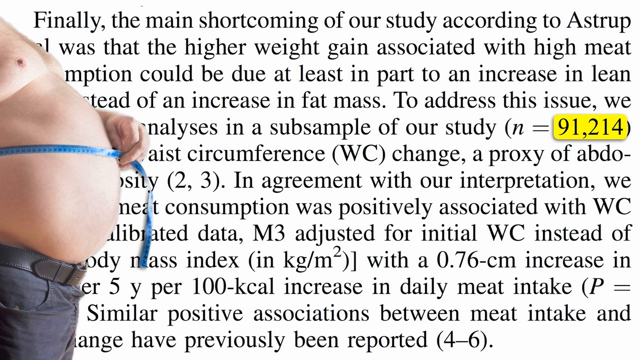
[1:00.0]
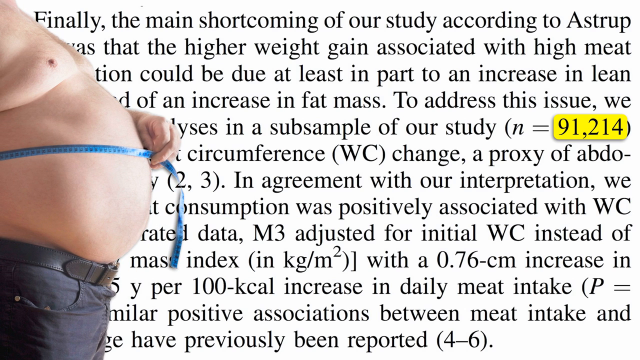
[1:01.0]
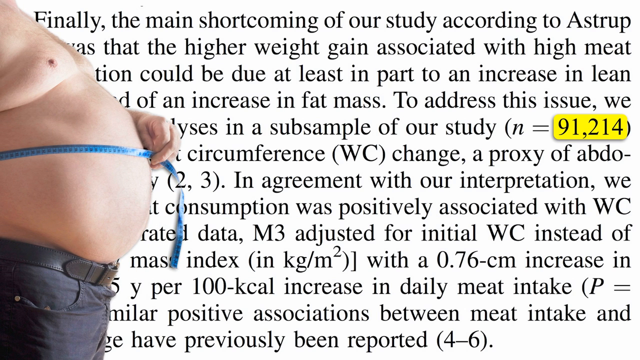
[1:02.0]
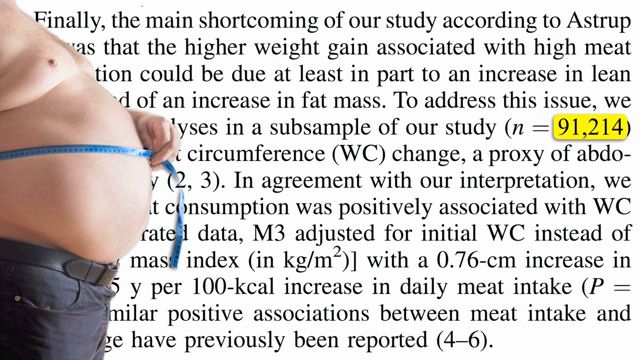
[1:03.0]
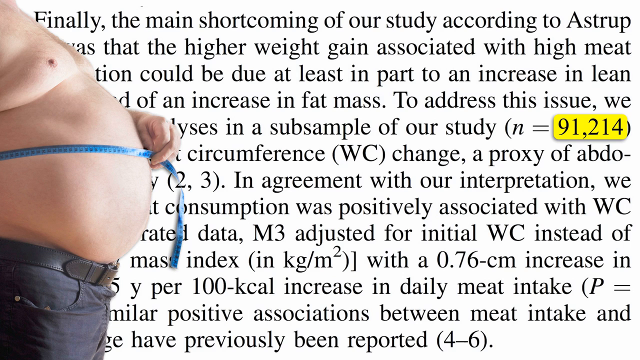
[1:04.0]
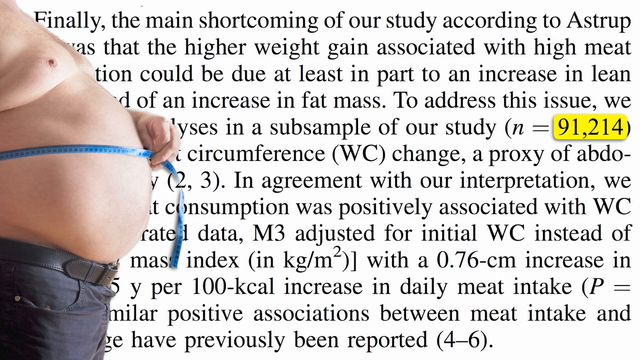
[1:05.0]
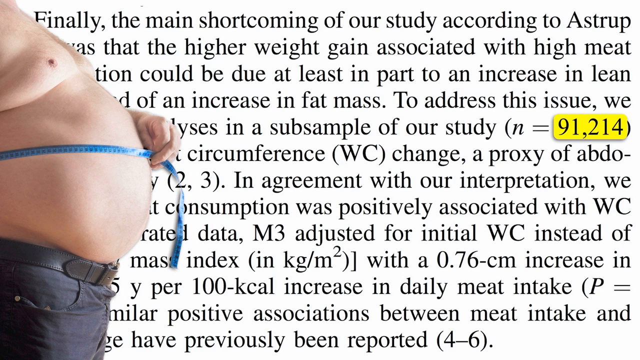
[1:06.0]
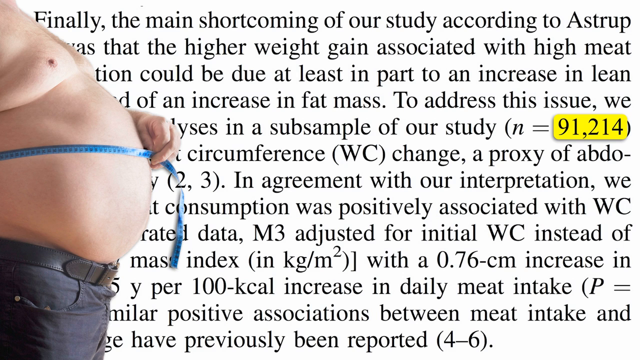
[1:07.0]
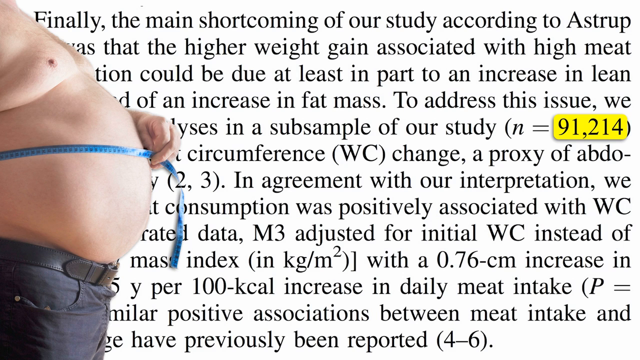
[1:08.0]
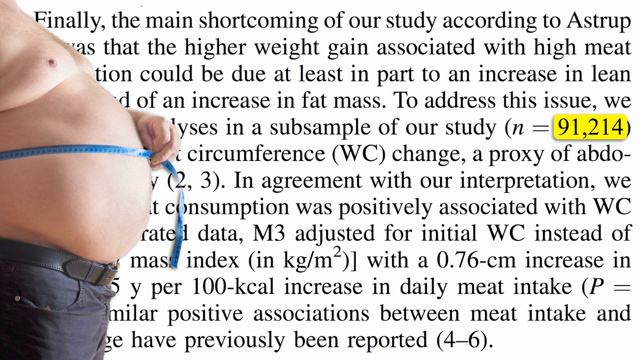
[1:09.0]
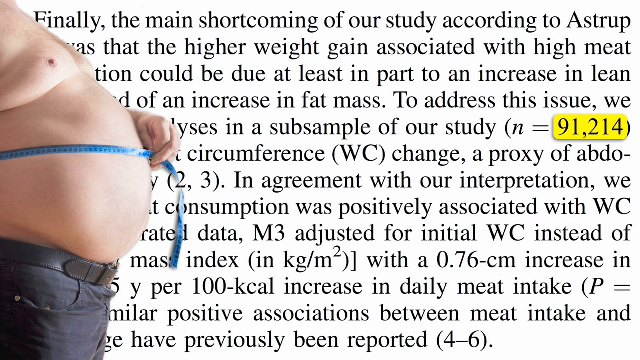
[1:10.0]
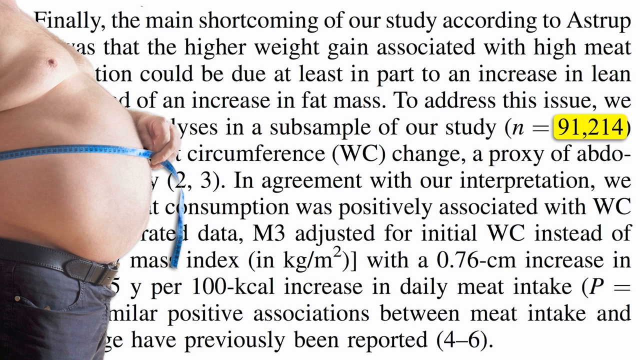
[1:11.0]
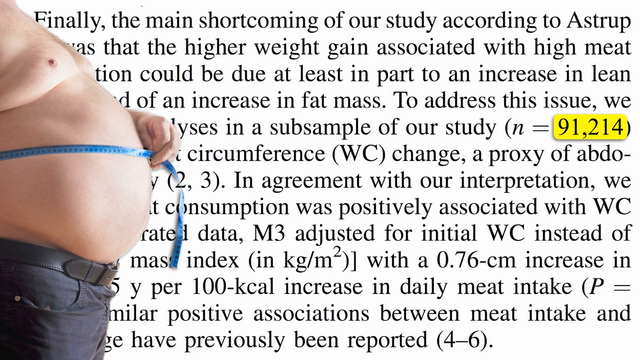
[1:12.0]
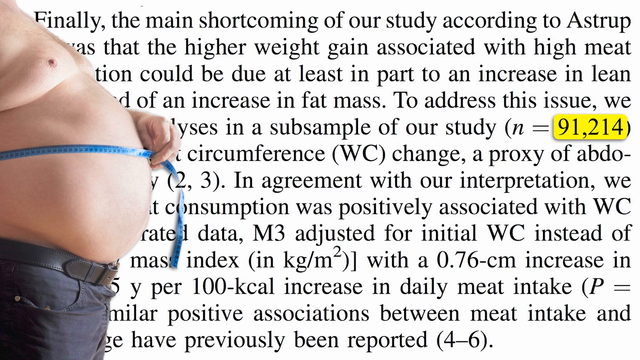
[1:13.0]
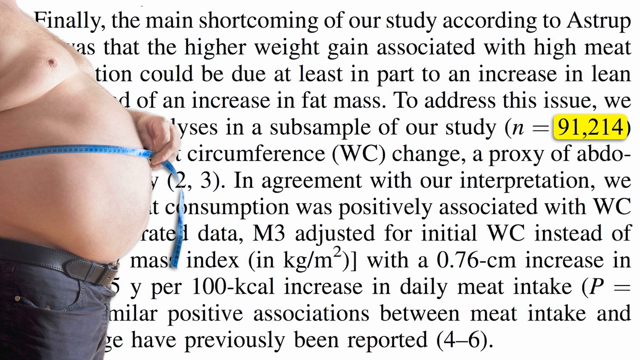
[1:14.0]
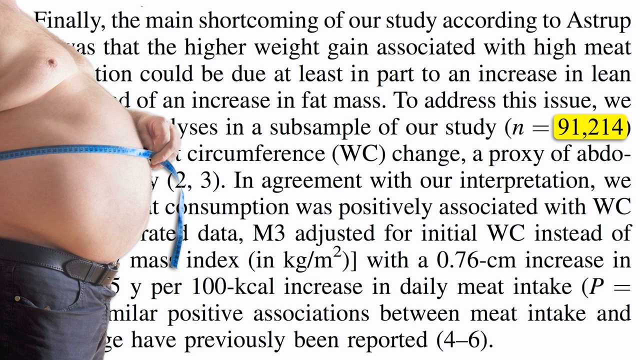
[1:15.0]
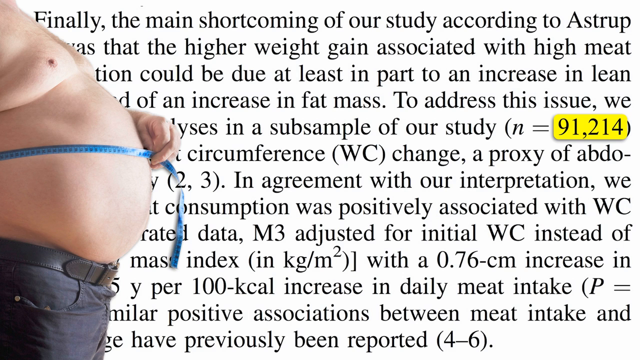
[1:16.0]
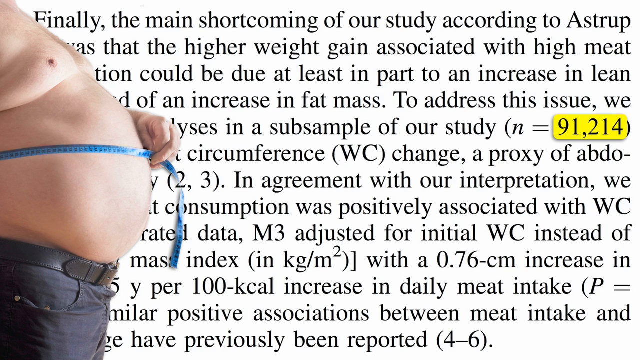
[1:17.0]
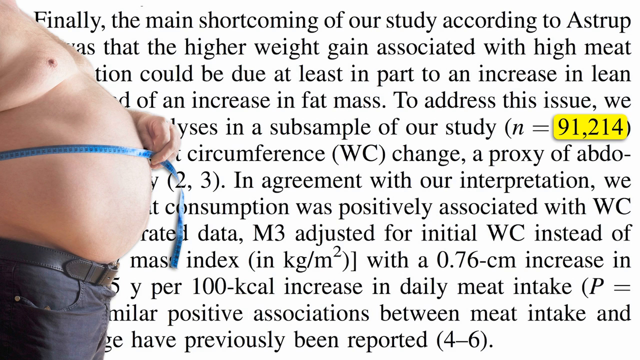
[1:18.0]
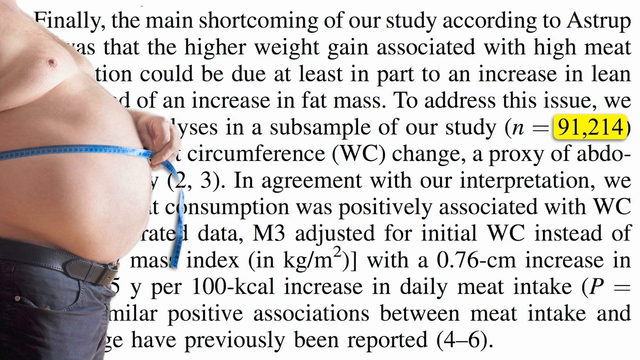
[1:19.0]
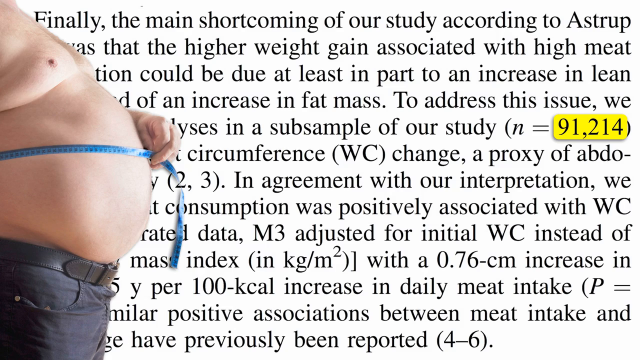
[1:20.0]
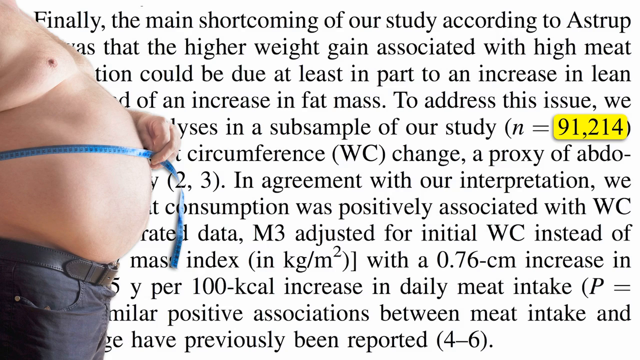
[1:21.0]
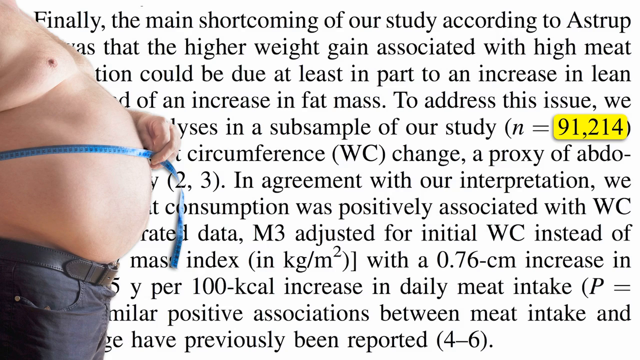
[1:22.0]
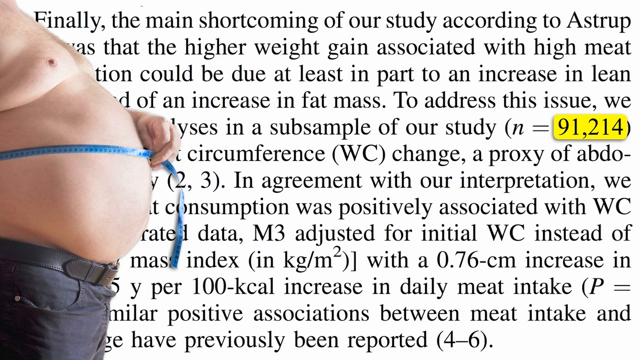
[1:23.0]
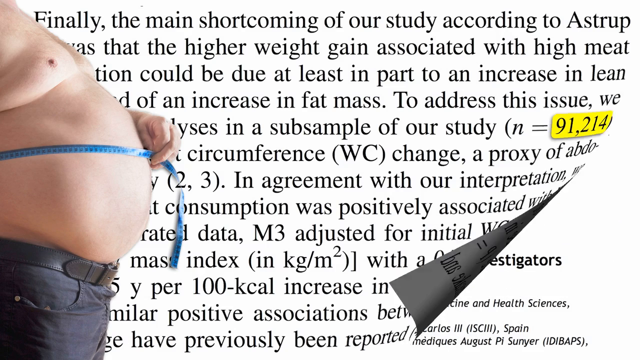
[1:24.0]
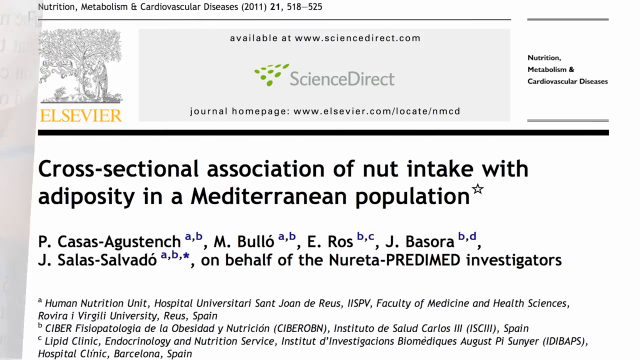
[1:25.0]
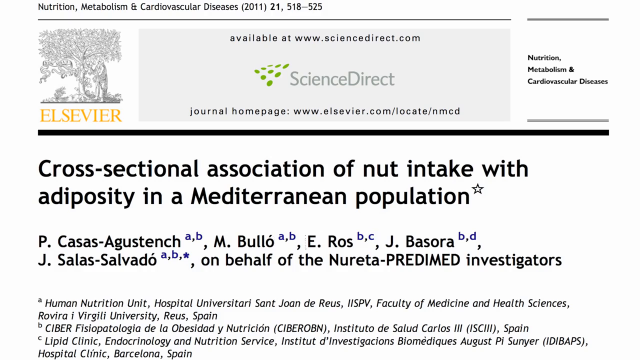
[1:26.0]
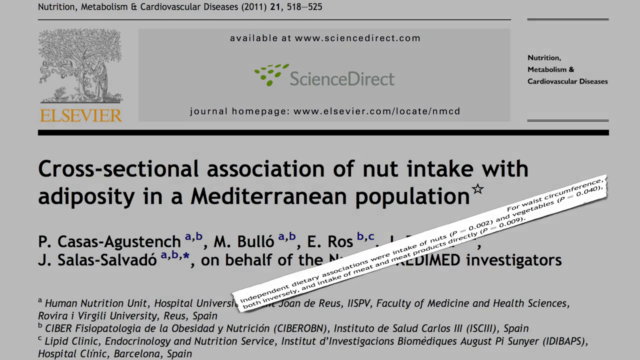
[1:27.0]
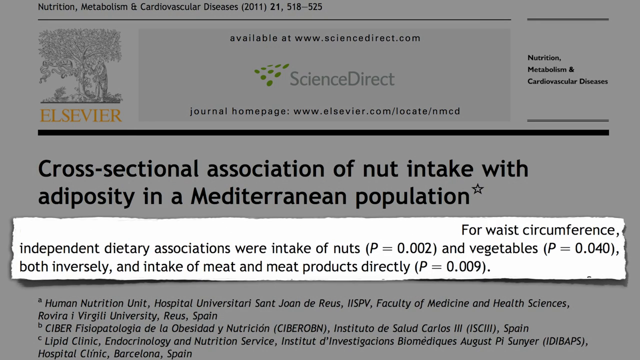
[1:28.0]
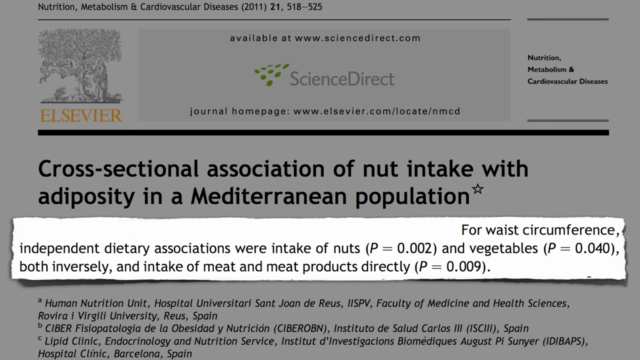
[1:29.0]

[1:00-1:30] A clipping that looks like it is probably from an academic journal, judging by its style, fills the background. On the left side of the screen is an image of a very overweight white man with no shirt, wearing a black belt and jeans, with a tape measure around his waist. His head and neck are not shown and his legs are not really visible; it is a torso shot that includes the upper part of his pants. The video lingers on this image over the article for a long time, probably at least 20 seconds, maybe 30. Then the page finally turns, peeling up from the lower right corner all the way to the left, revealing another academic article.